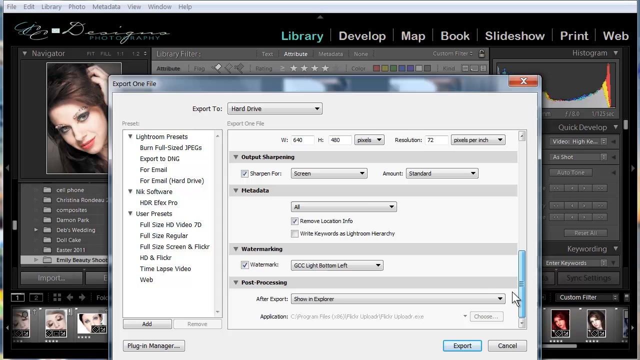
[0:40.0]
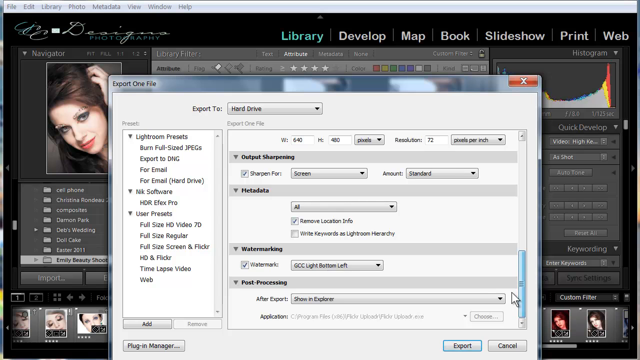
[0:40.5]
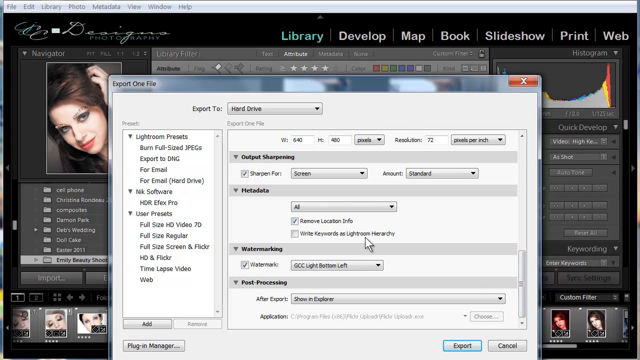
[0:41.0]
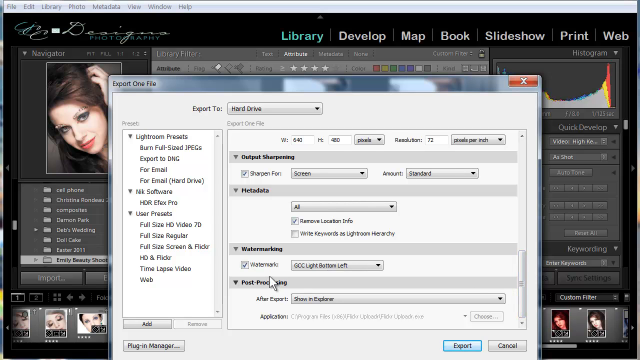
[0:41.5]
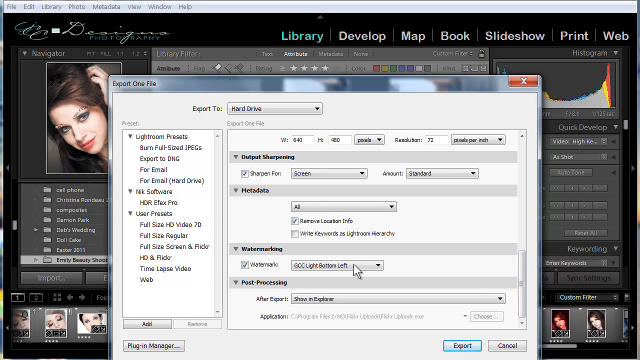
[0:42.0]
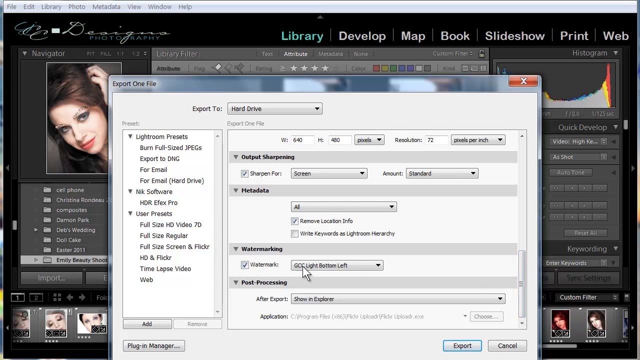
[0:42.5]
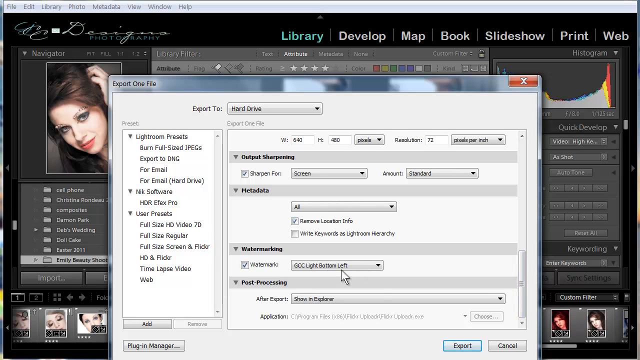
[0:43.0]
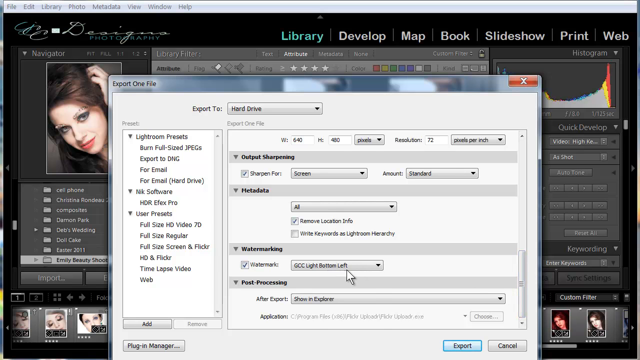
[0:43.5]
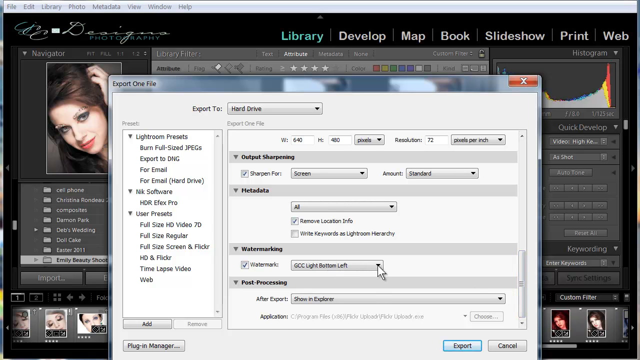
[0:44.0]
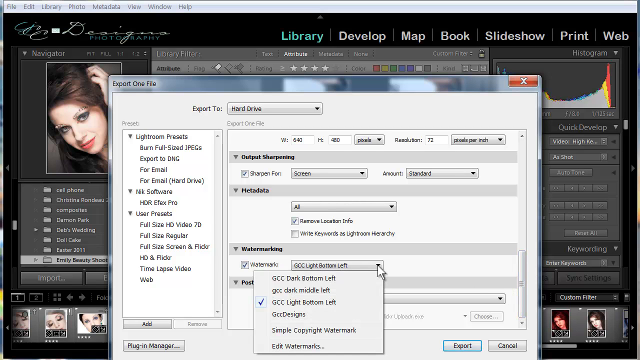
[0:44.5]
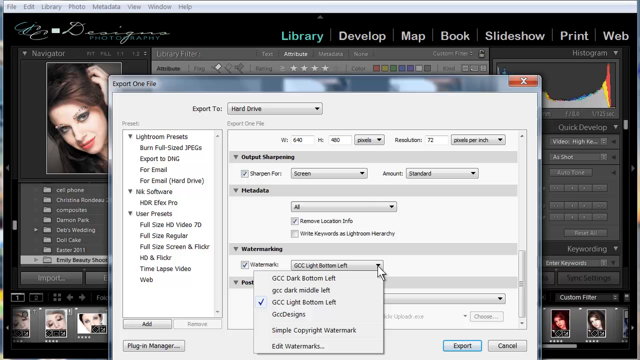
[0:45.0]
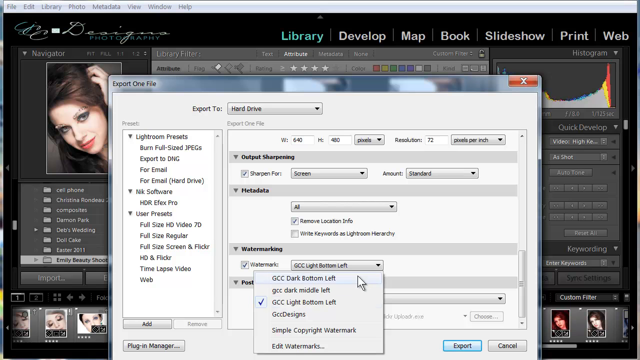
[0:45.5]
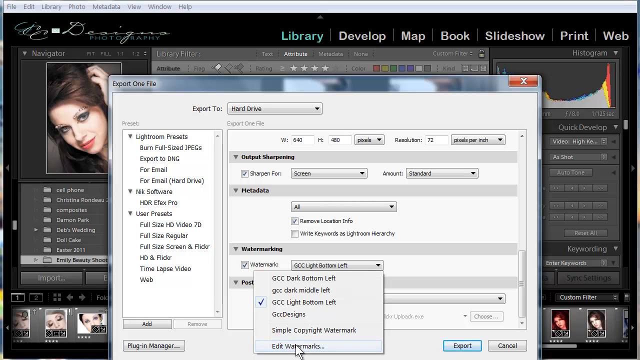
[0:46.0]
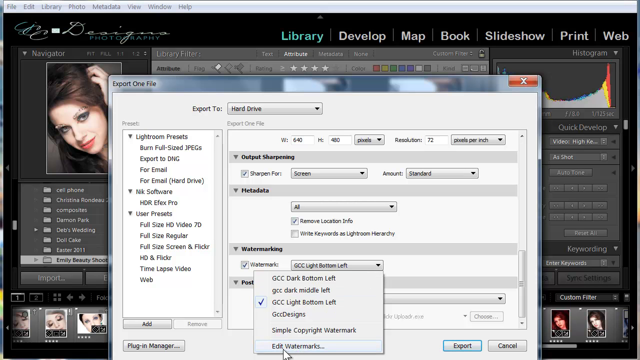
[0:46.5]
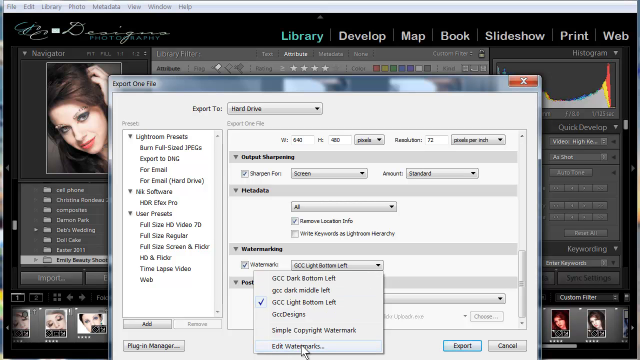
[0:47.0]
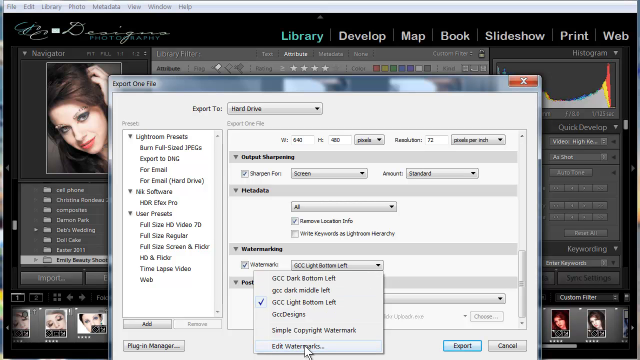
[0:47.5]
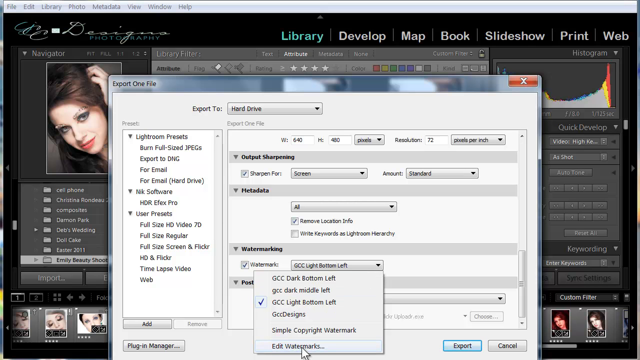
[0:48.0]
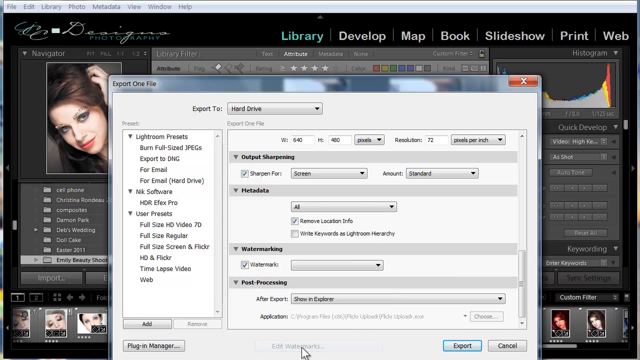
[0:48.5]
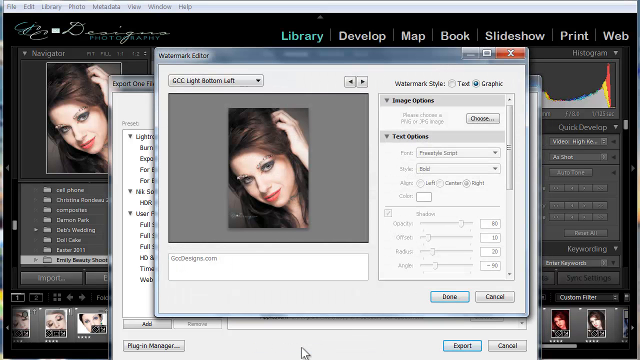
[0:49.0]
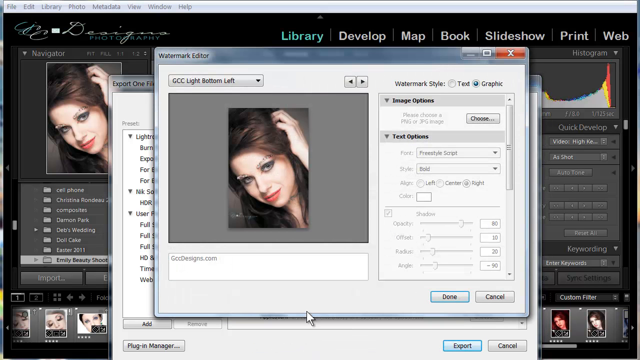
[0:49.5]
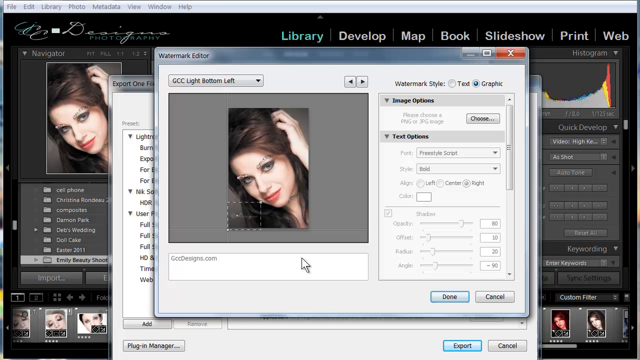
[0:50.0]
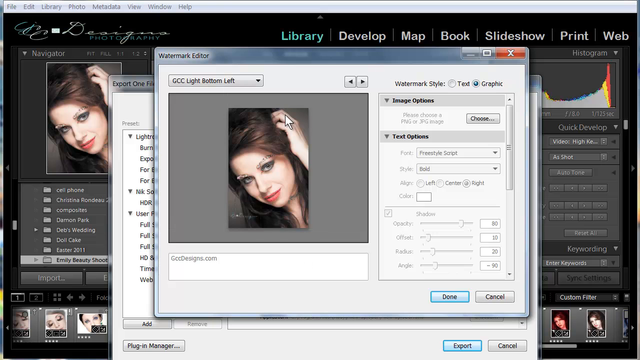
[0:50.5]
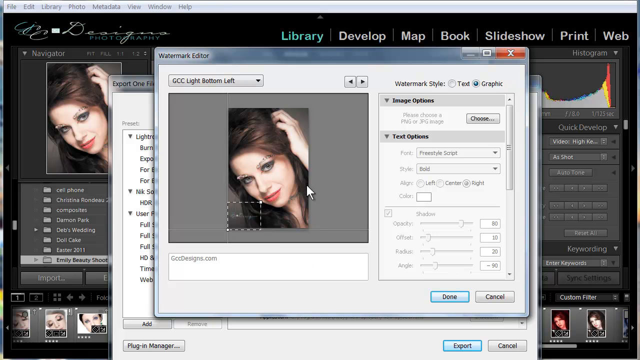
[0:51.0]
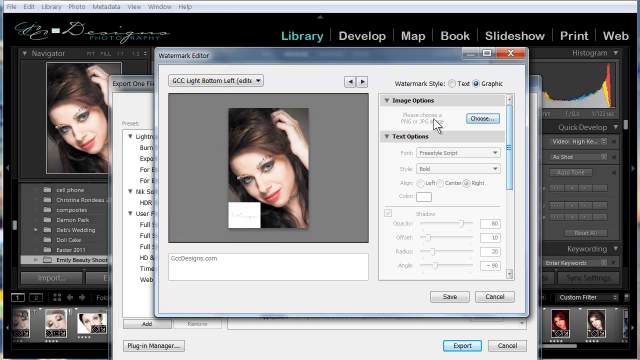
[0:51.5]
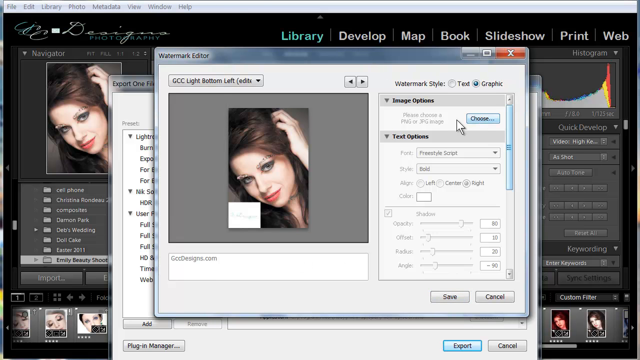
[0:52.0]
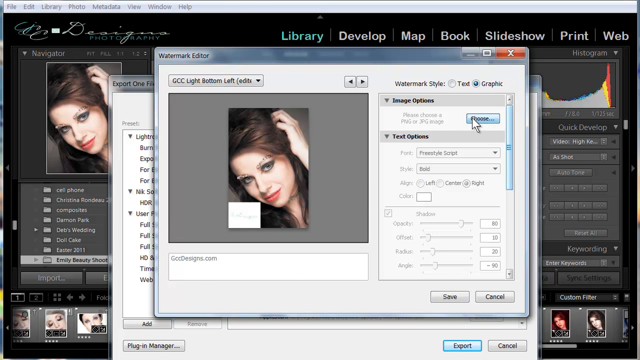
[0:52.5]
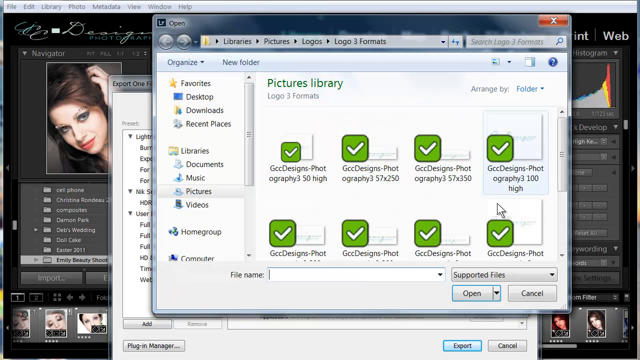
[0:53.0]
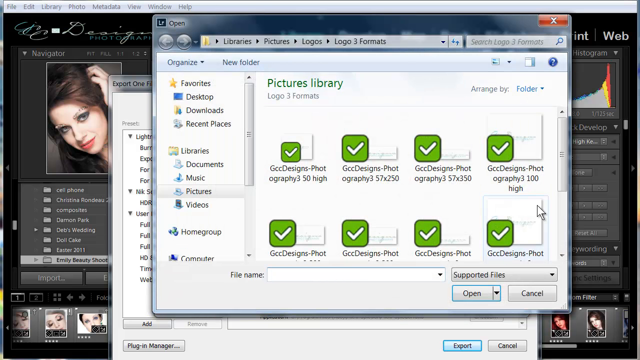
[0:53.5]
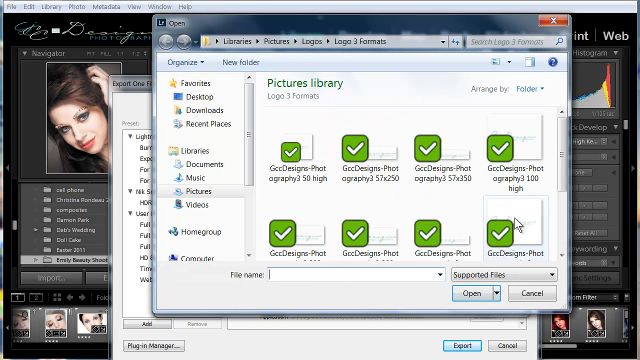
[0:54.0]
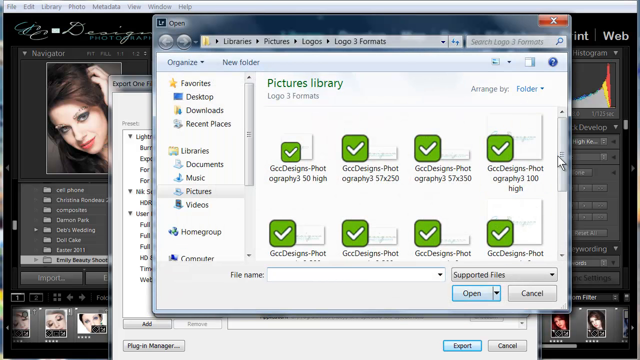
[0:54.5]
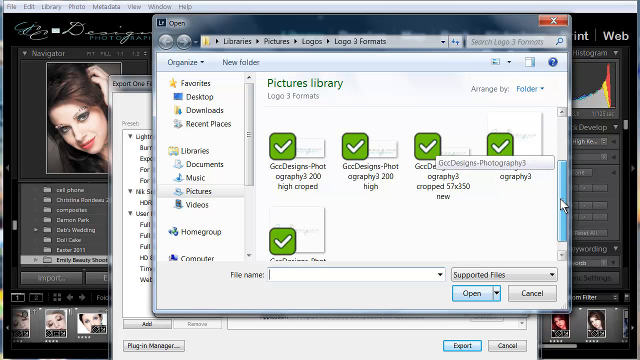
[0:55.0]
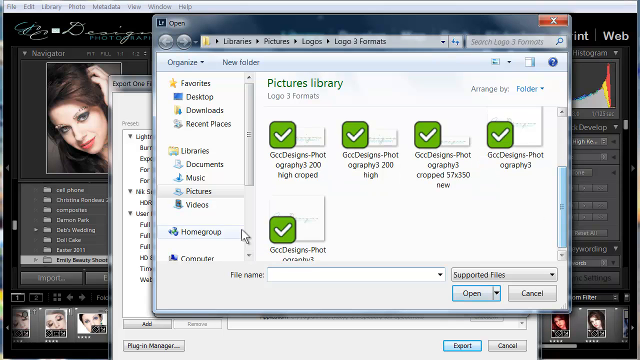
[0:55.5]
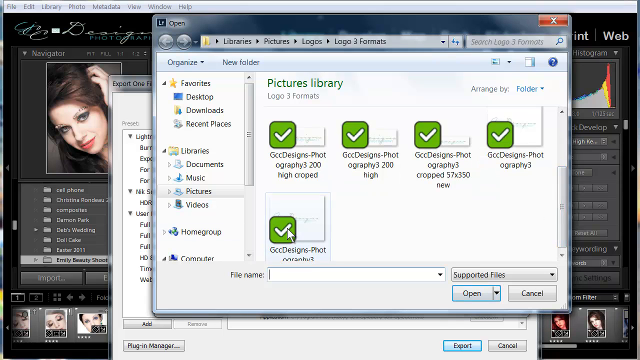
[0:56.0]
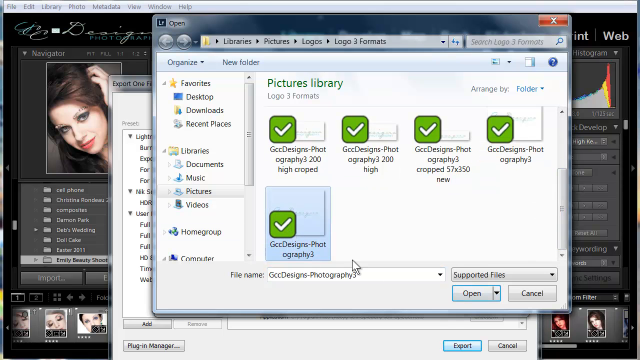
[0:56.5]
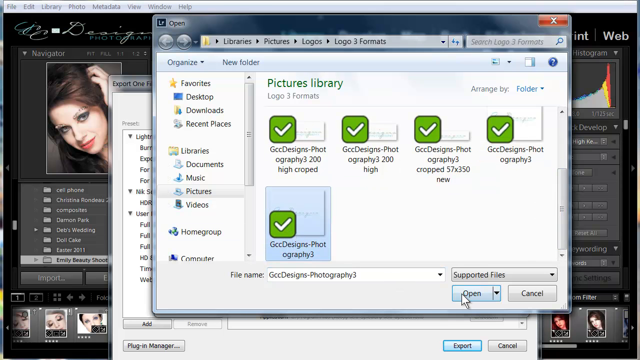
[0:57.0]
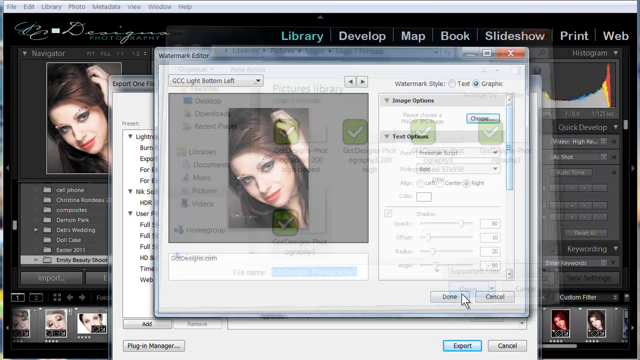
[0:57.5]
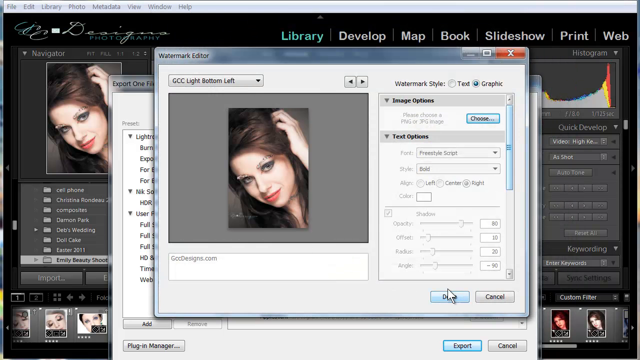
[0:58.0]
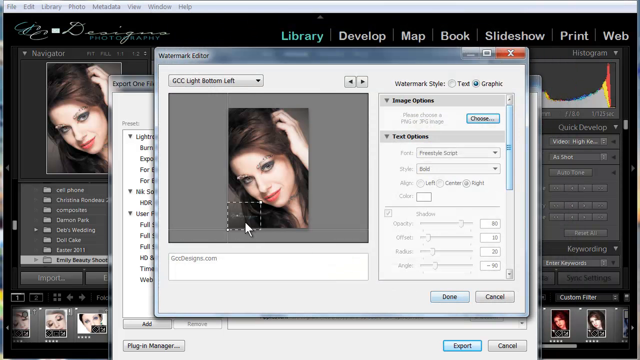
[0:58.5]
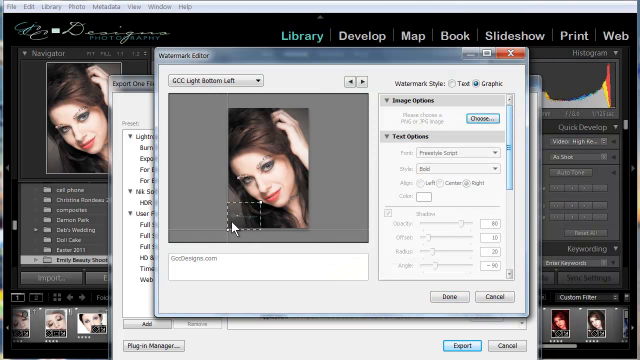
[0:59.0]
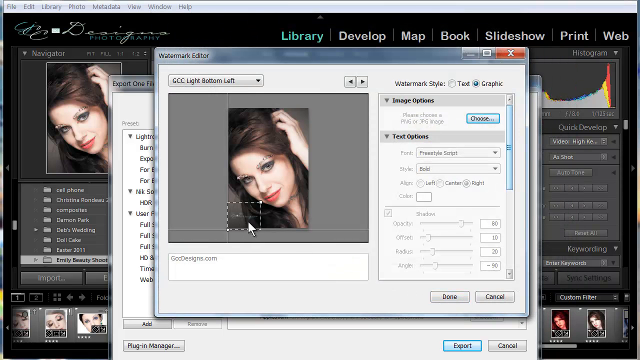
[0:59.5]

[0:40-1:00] Within the export settings, the user selects a watermarking option, which brings up what looks to be a watermark editor, as indicated by the top of the window. The user chooses among the watermark editor options and picks an image option, which opens the file explorer. The user looks through what appears to be a pictures library containing a few photography designs, scrolls down and selects the one at the bottom, "GCC designs Photography 3". A small version of that image is placed on top of the image of the woman as a watermark, and the user sets it in the bottom left corner, where it covers that corner of the image.